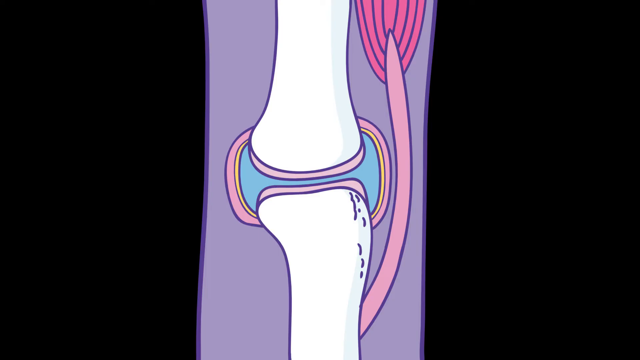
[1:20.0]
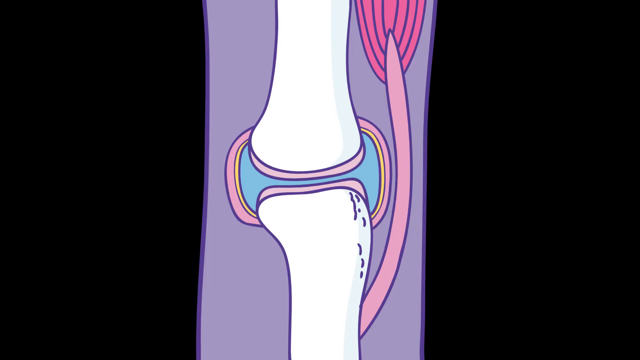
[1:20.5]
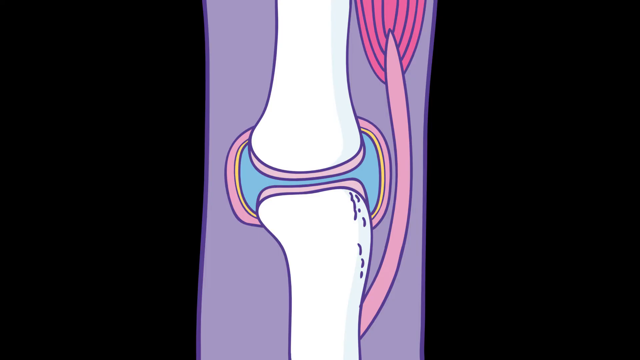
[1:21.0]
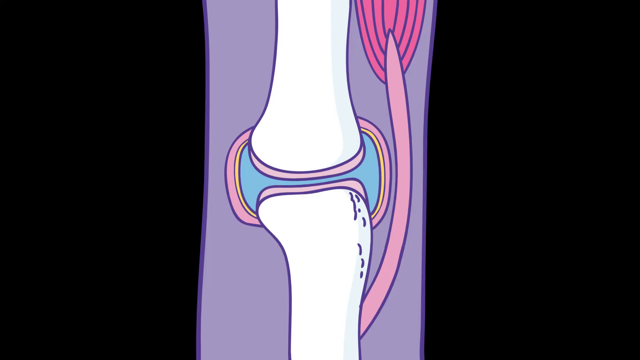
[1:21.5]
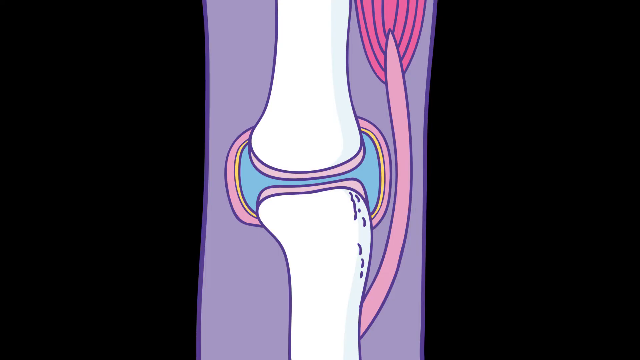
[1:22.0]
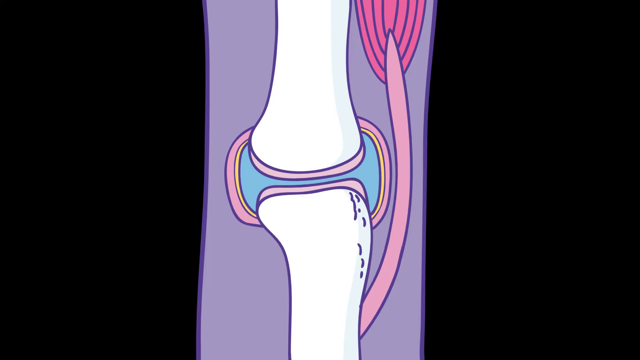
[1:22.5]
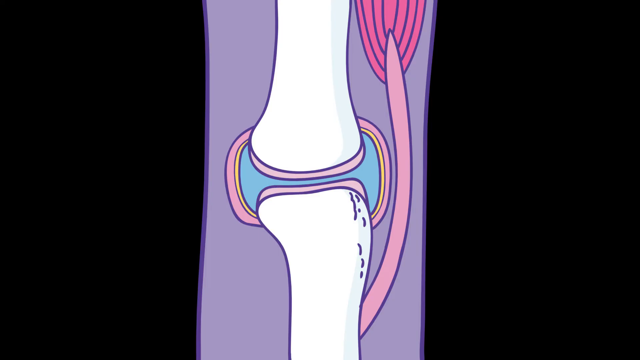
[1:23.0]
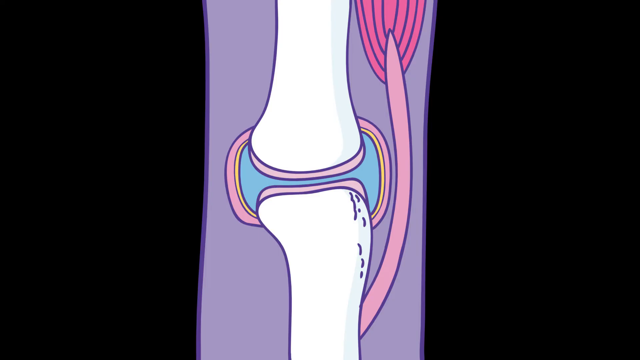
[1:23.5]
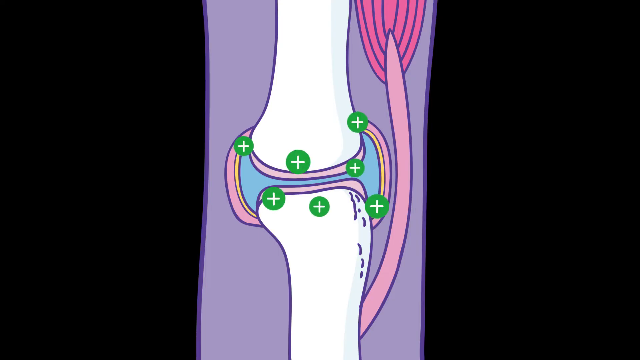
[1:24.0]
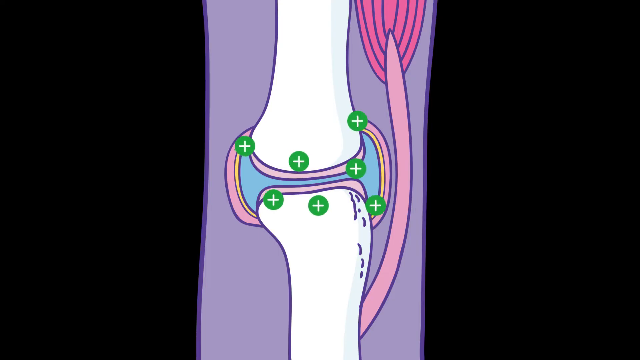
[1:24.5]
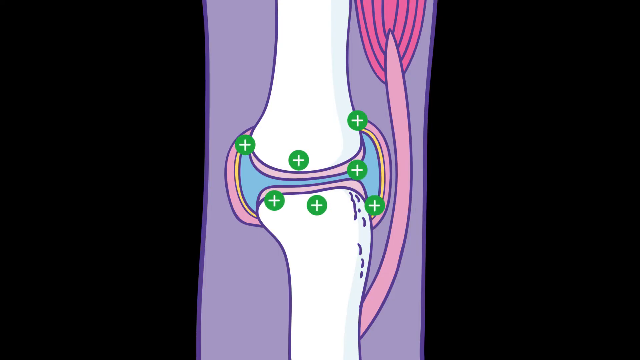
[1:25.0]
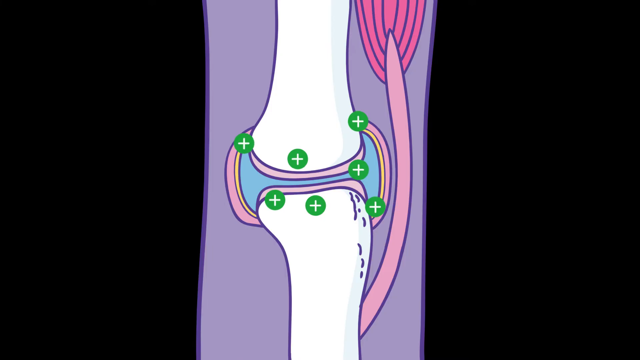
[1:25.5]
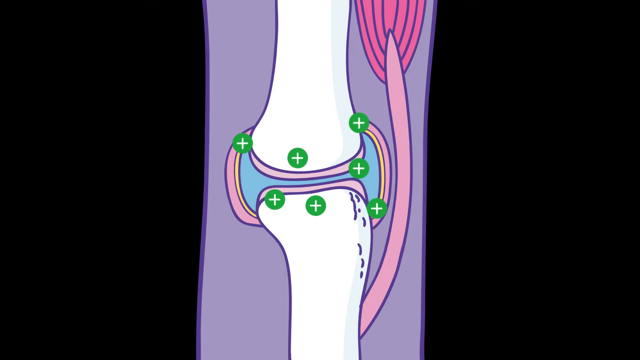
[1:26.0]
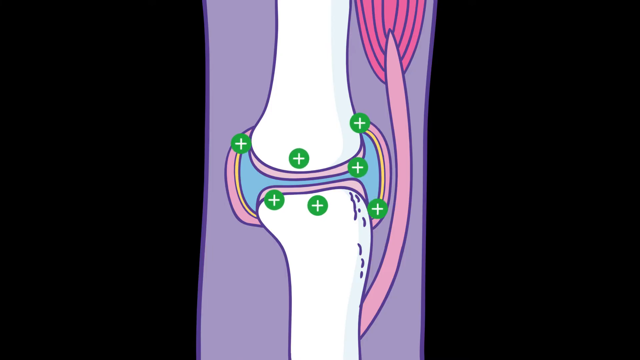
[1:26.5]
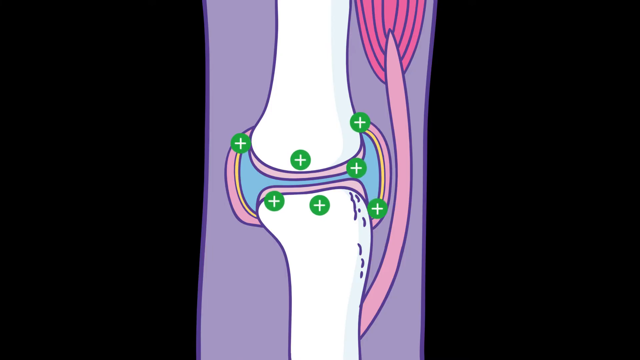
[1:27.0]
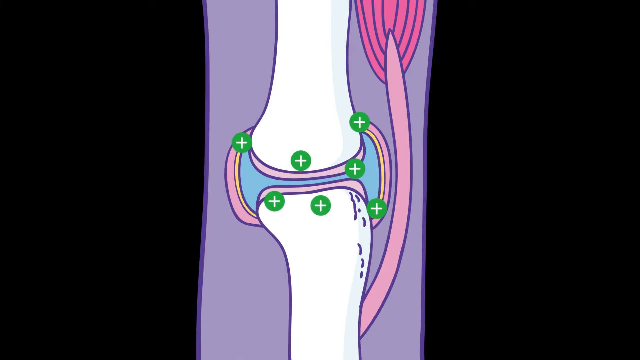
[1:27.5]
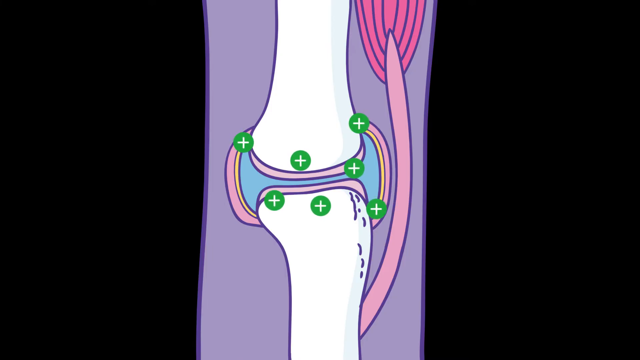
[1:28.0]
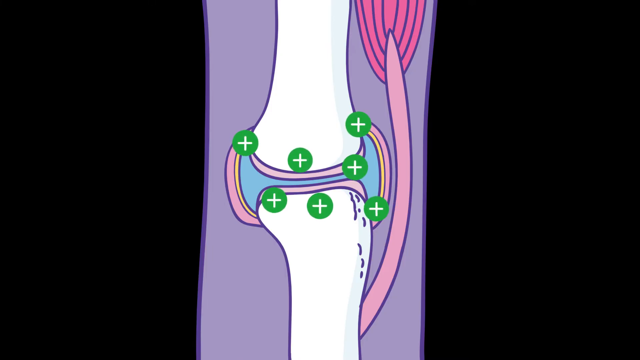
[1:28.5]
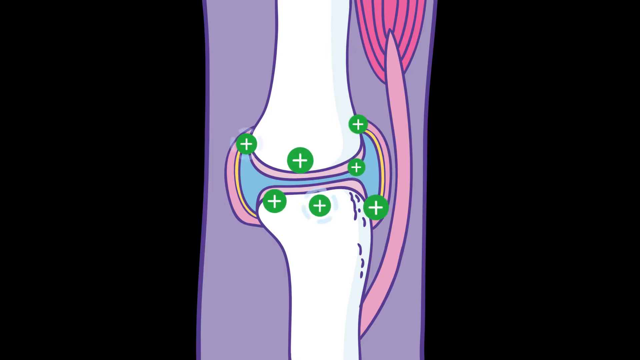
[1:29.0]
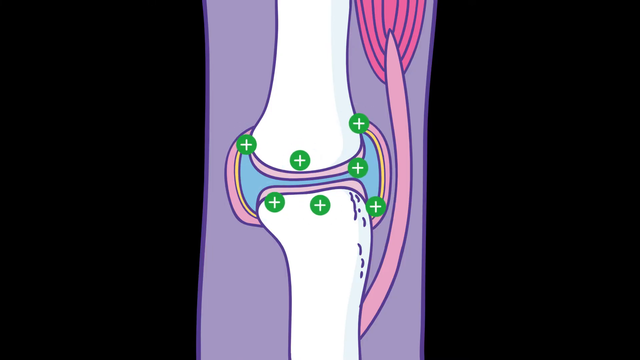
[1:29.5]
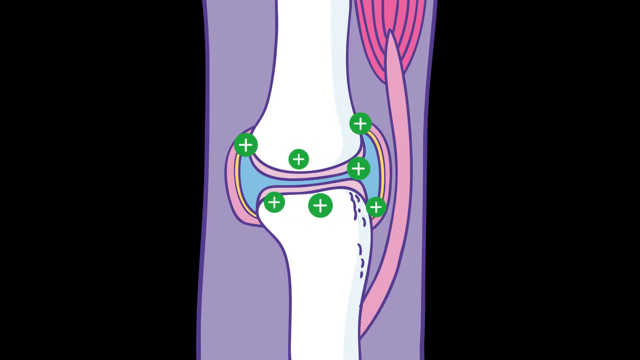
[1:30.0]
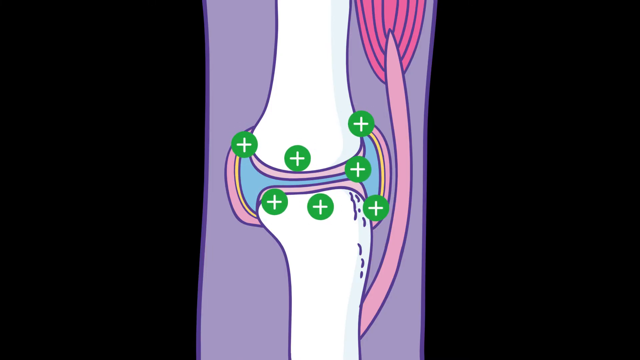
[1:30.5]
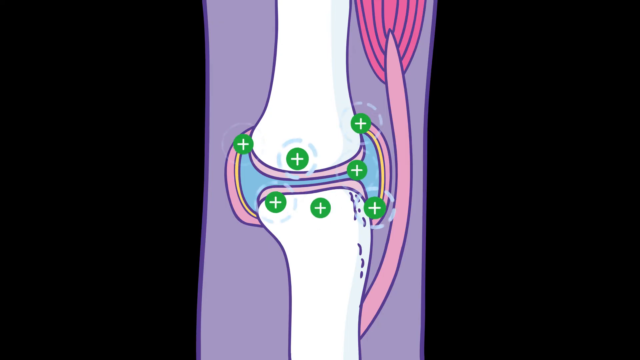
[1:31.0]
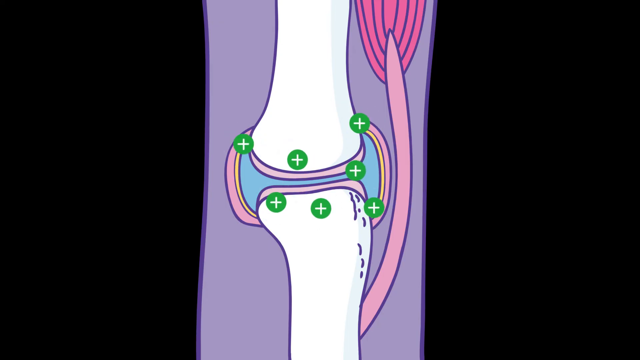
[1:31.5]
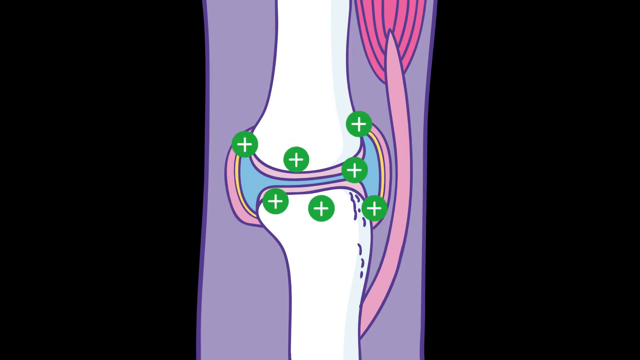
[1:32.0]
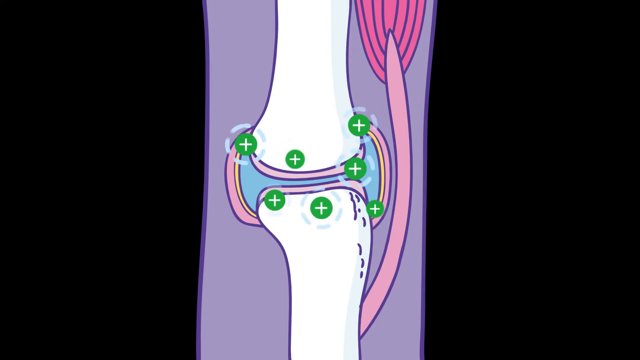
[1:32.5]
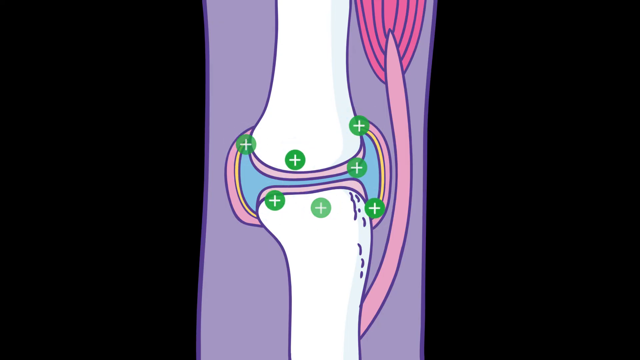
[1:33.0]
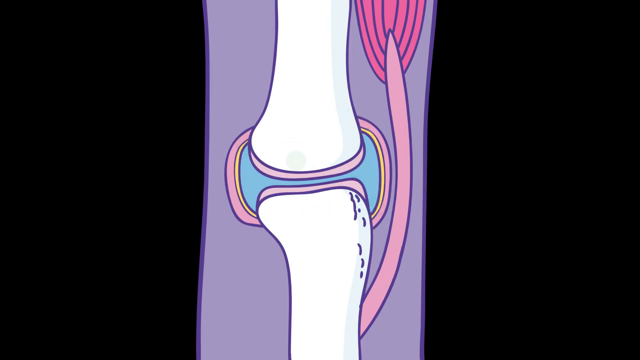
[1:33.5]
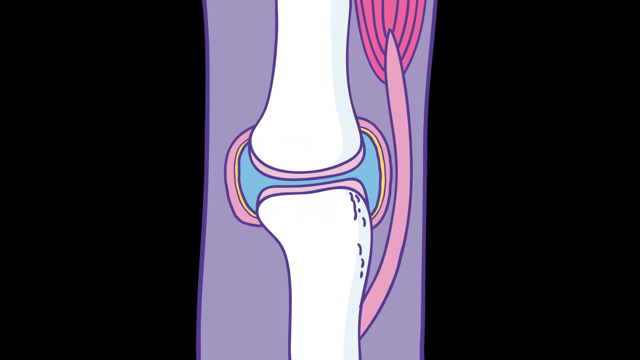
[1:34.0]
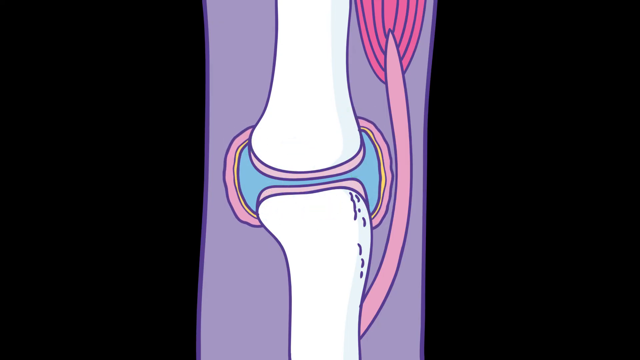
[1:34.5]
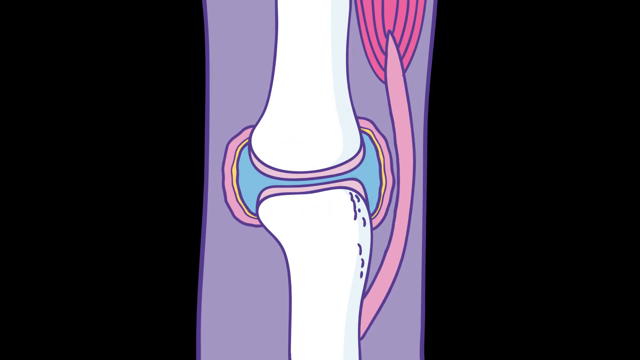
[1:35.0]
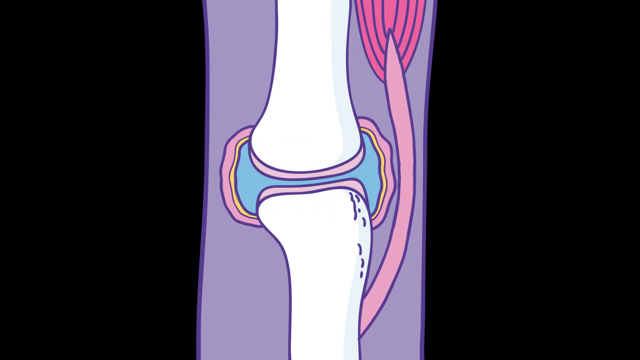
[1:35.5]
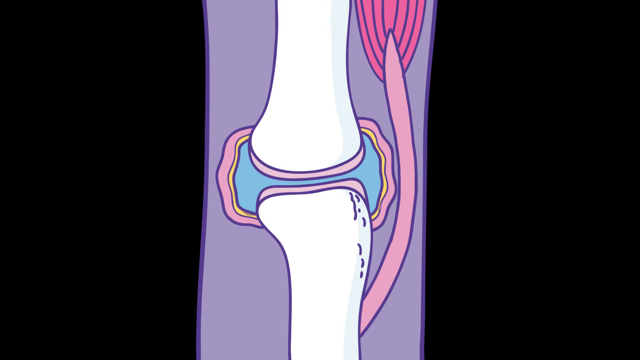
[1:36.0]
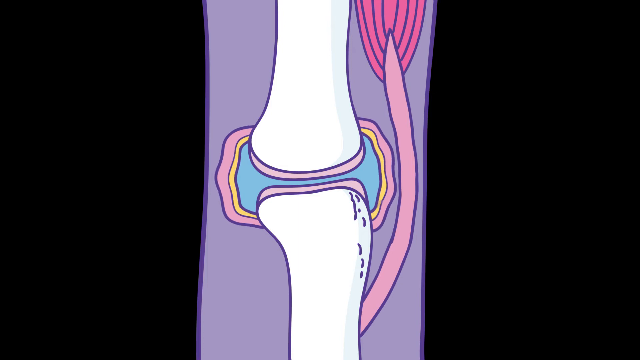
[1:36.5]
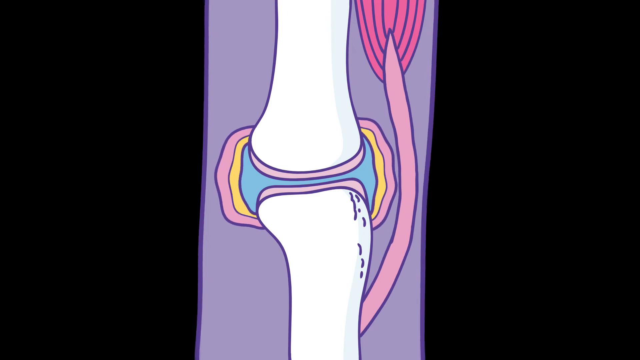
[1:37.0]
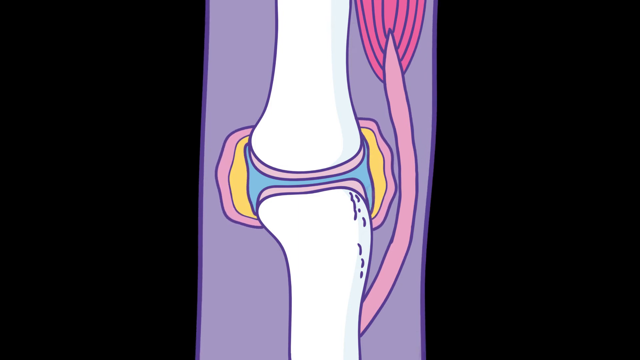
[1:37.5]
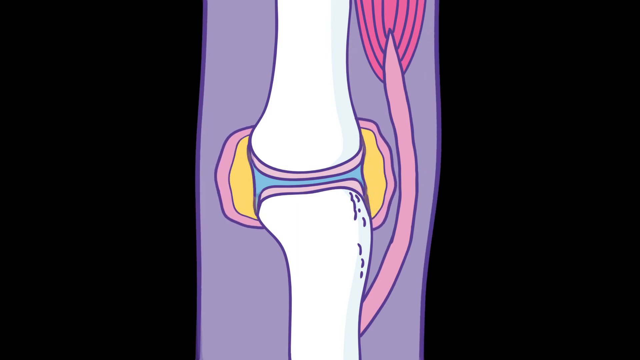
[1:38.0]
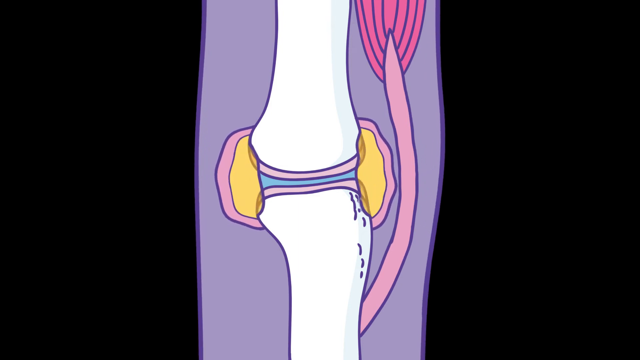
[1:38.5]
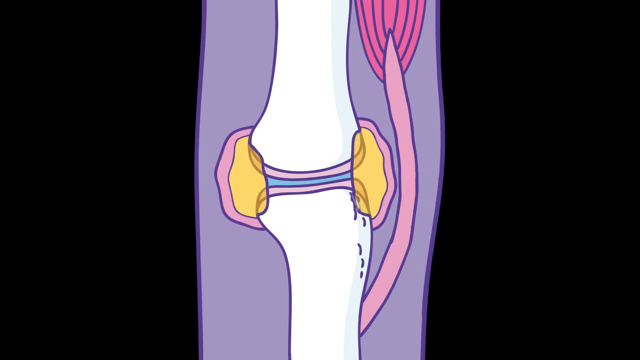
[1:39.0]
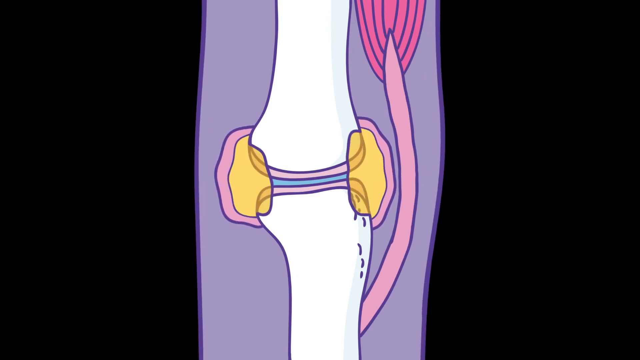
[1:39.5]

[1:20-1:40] Green circles with white pluses in them appear as little spots on the bones and tendons of the knee animation. They move around a little and grow bigger and smaller, possibly representing inflammation. The knee swells a little, and it looks like fluid may be building up, possibly shown in yellow. The bone and tendons remain visible along with the green circles, in colors of purple, white, red, blue, peach and yellow.